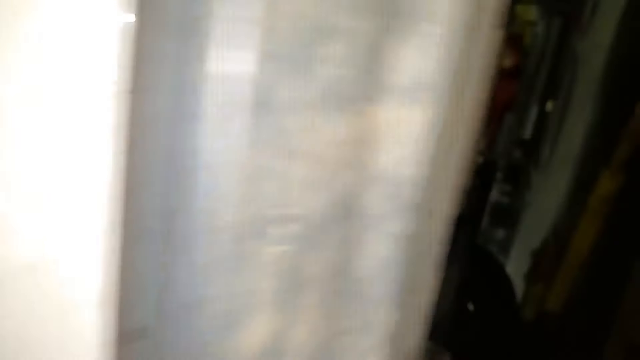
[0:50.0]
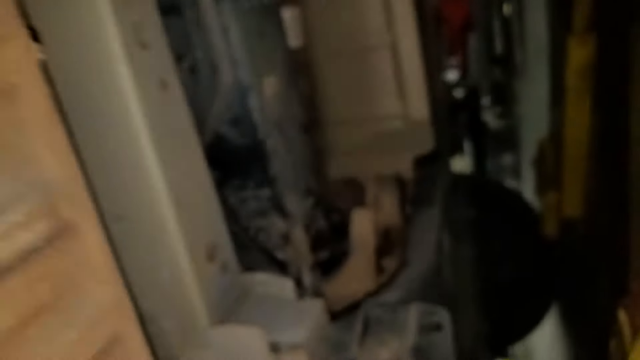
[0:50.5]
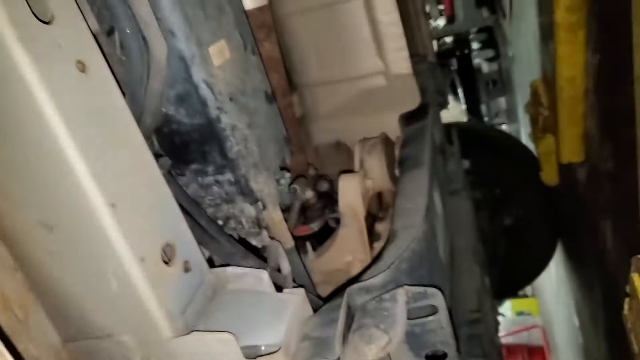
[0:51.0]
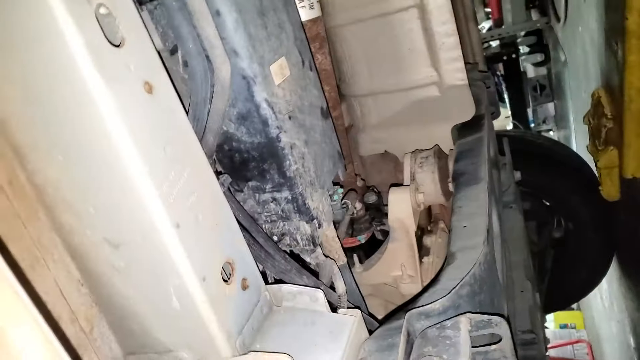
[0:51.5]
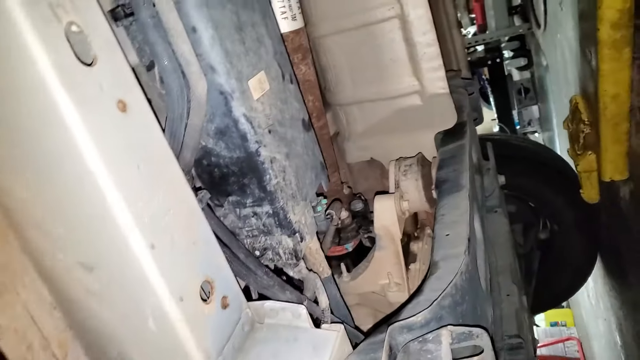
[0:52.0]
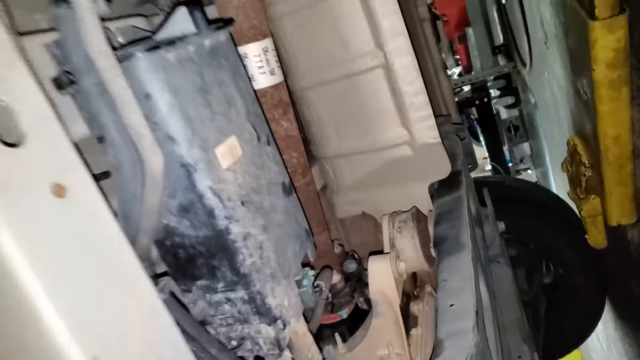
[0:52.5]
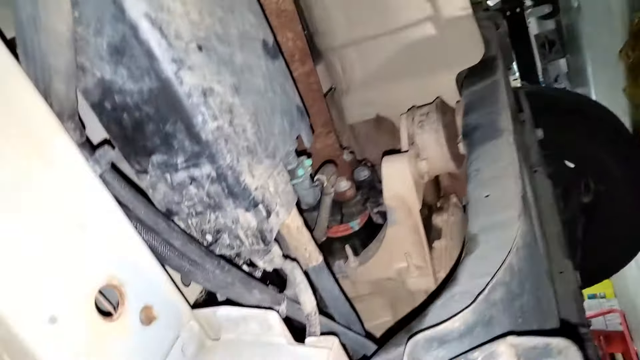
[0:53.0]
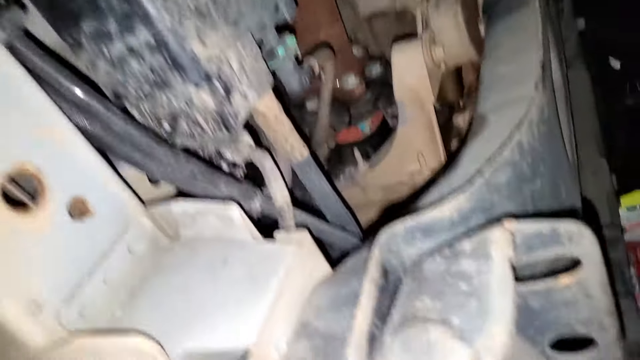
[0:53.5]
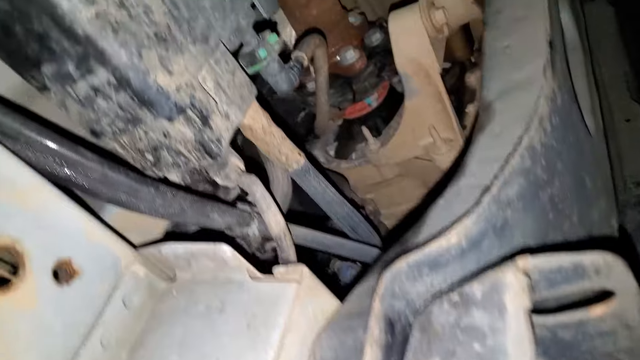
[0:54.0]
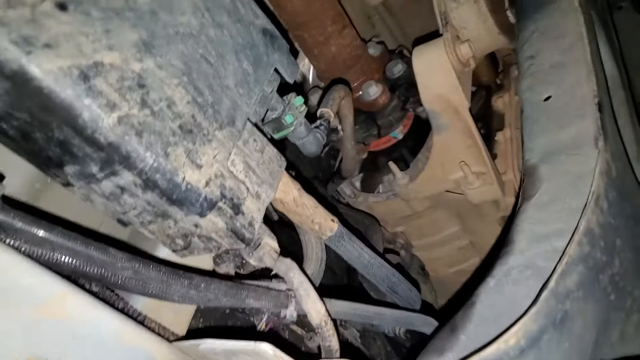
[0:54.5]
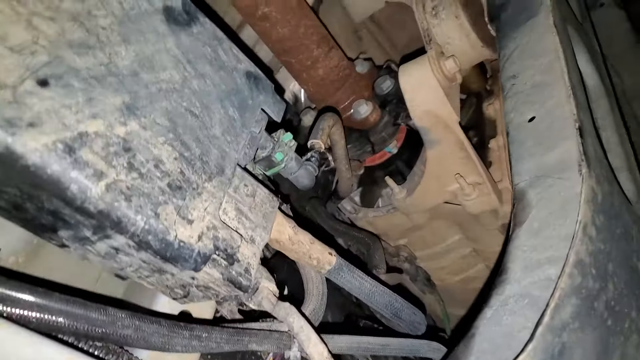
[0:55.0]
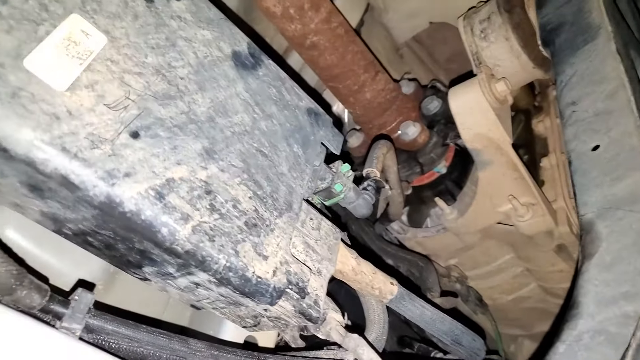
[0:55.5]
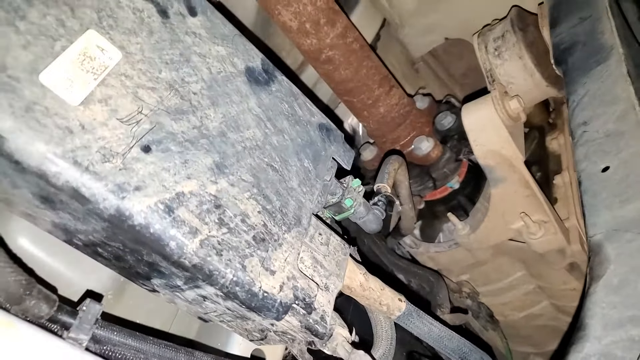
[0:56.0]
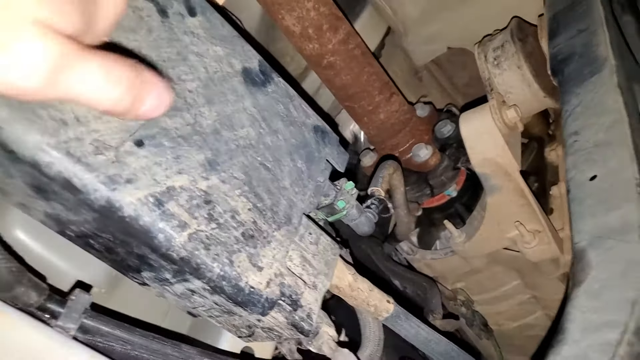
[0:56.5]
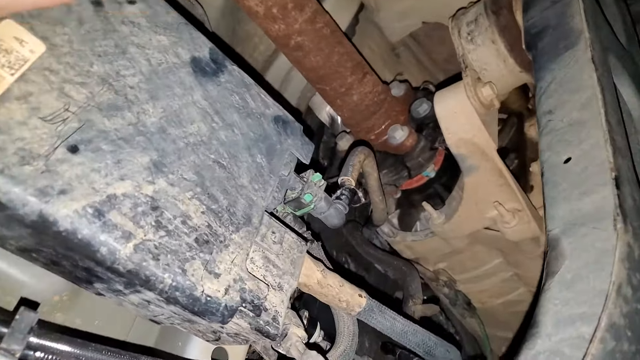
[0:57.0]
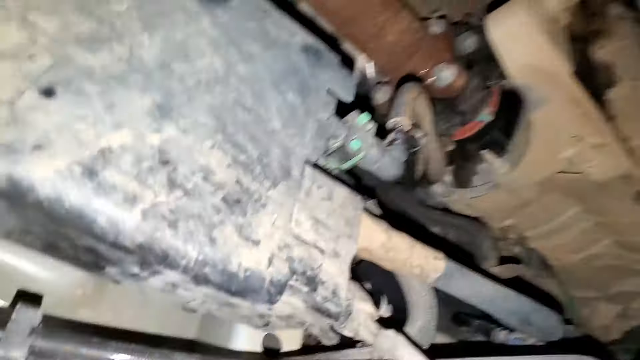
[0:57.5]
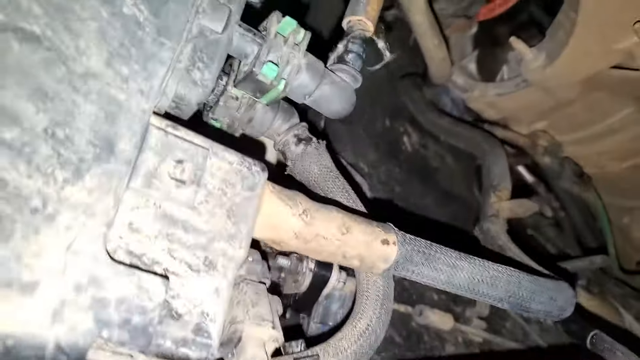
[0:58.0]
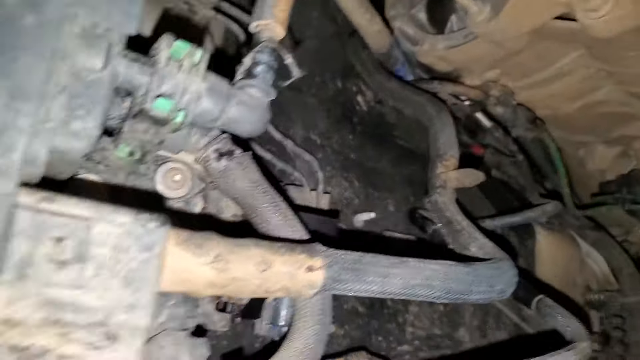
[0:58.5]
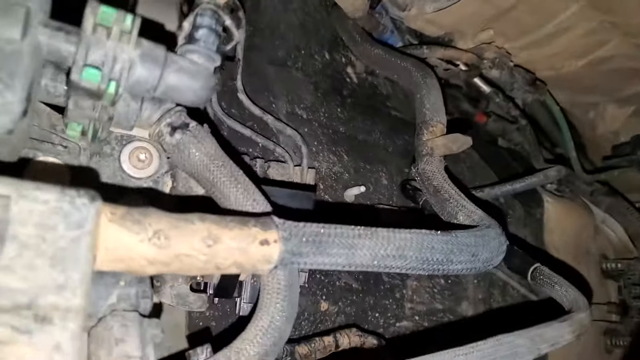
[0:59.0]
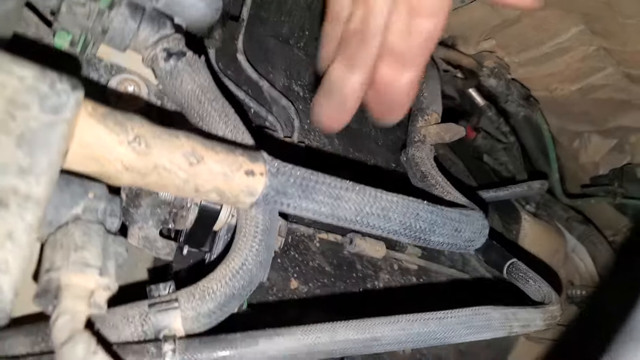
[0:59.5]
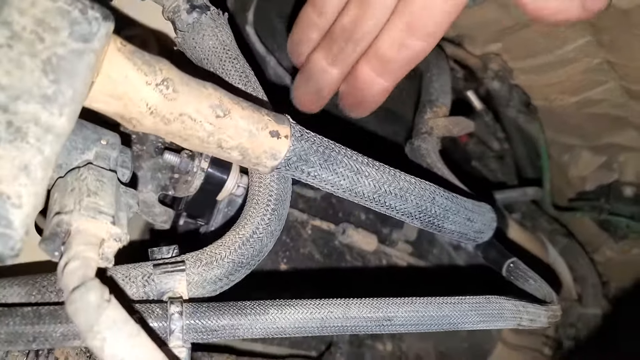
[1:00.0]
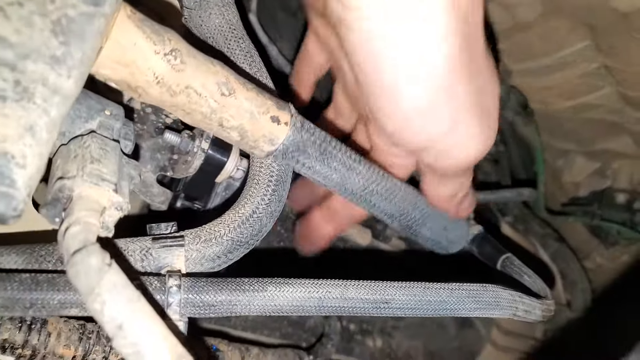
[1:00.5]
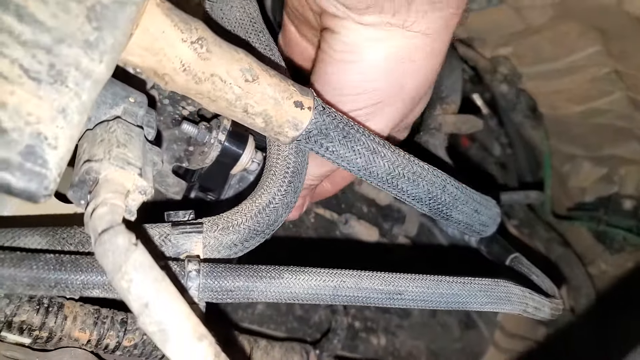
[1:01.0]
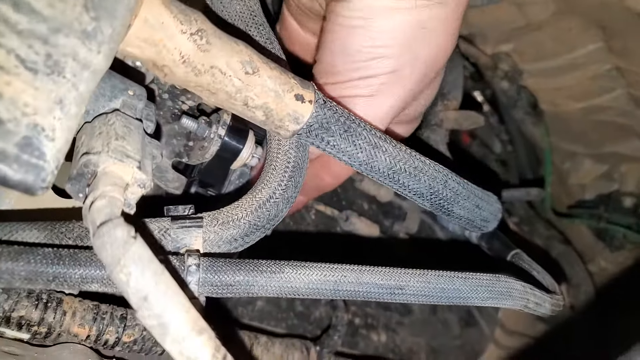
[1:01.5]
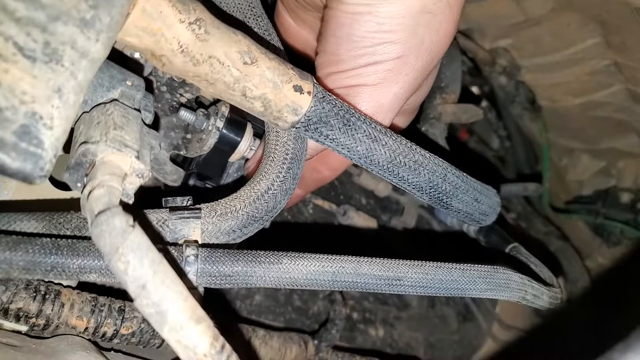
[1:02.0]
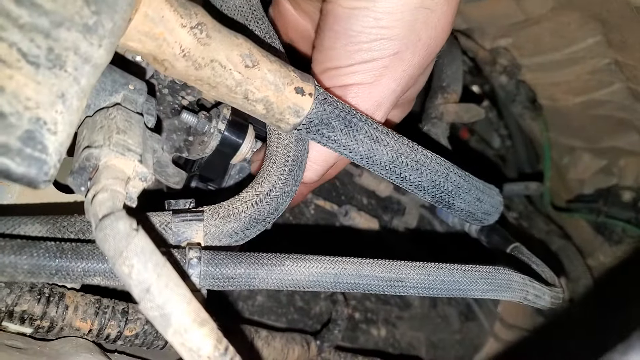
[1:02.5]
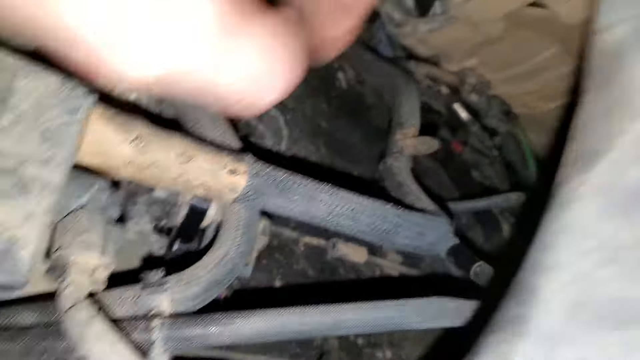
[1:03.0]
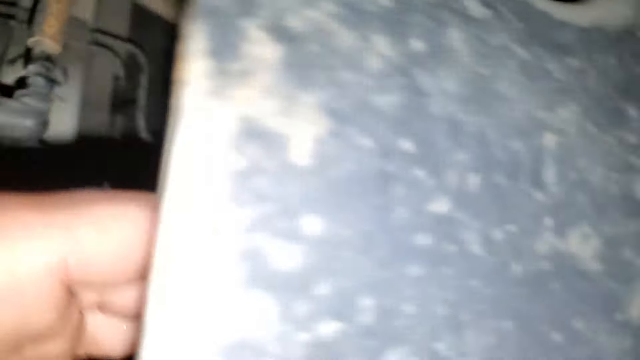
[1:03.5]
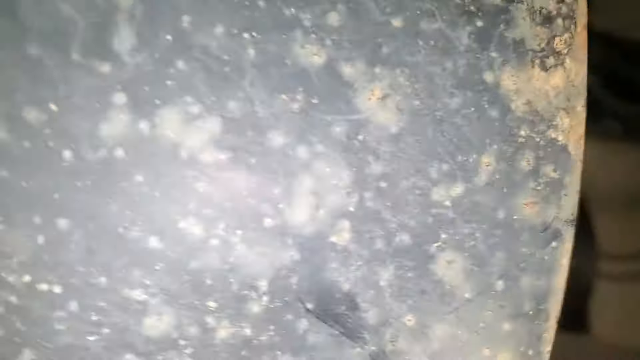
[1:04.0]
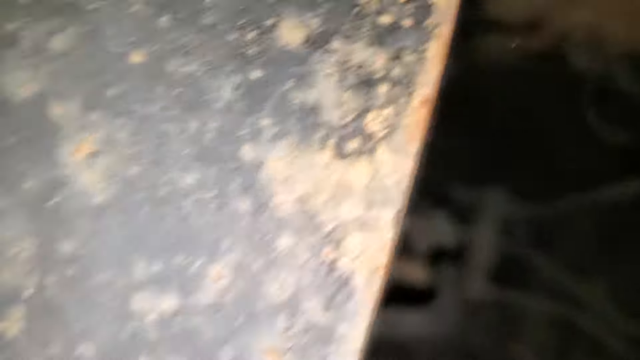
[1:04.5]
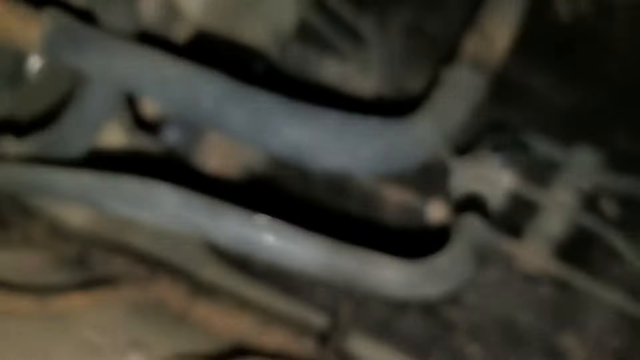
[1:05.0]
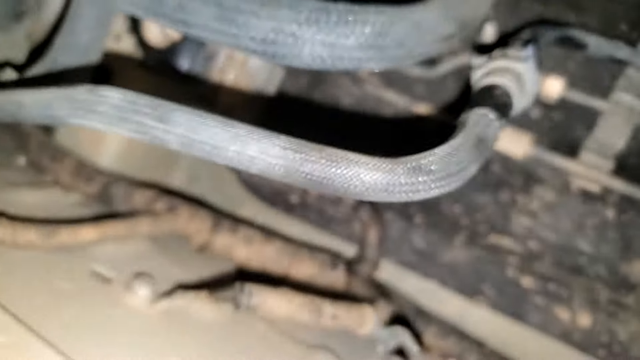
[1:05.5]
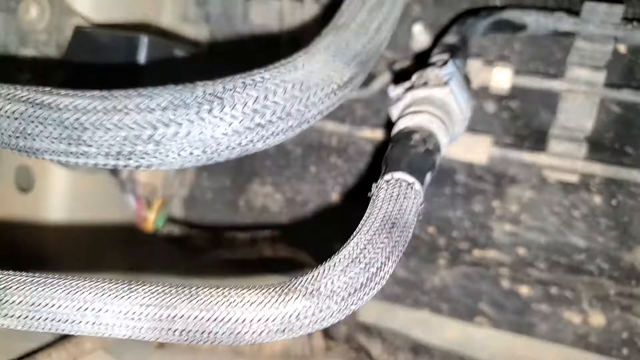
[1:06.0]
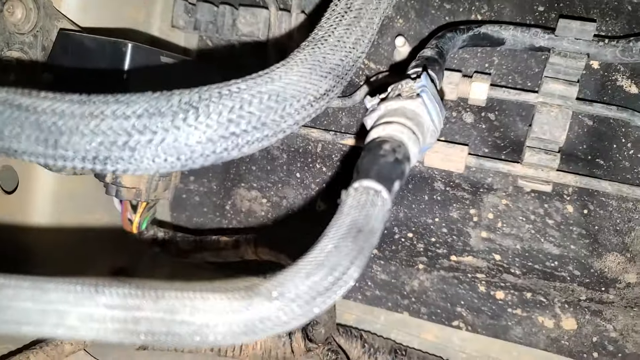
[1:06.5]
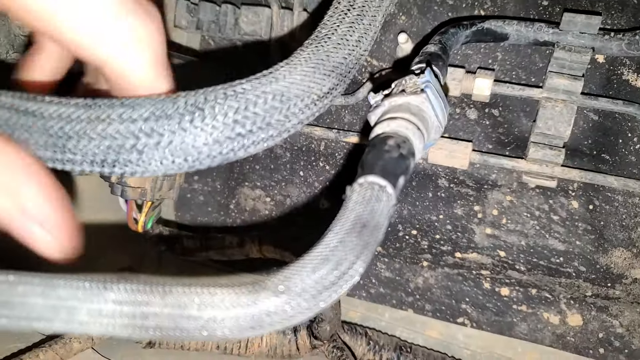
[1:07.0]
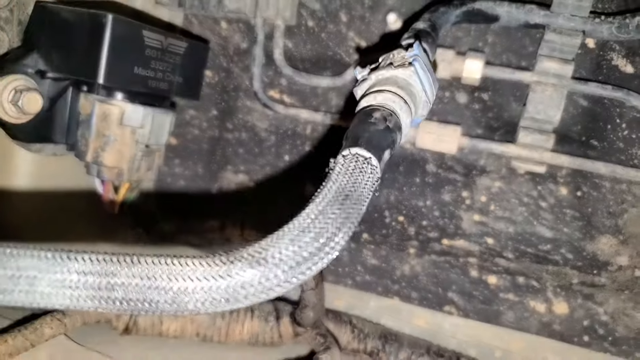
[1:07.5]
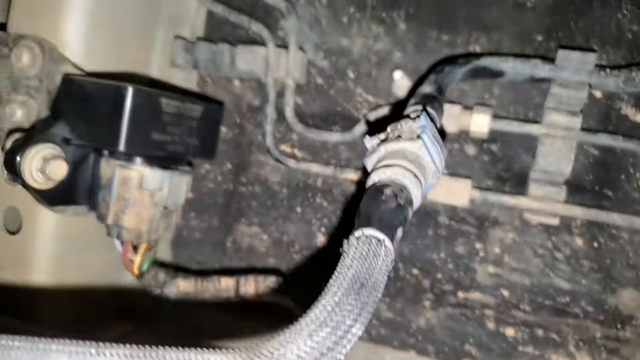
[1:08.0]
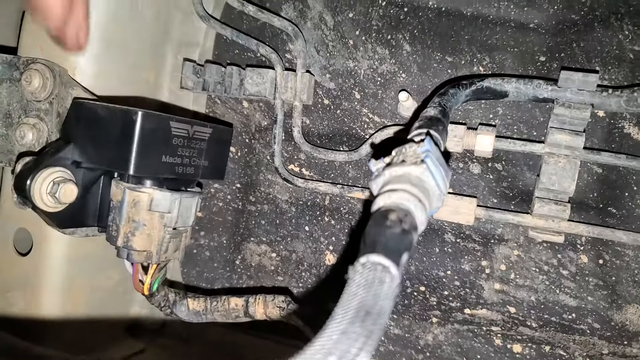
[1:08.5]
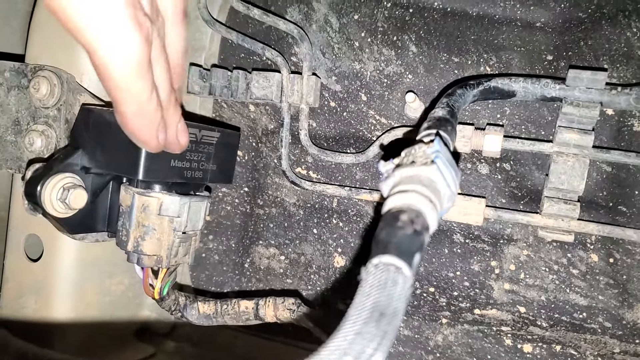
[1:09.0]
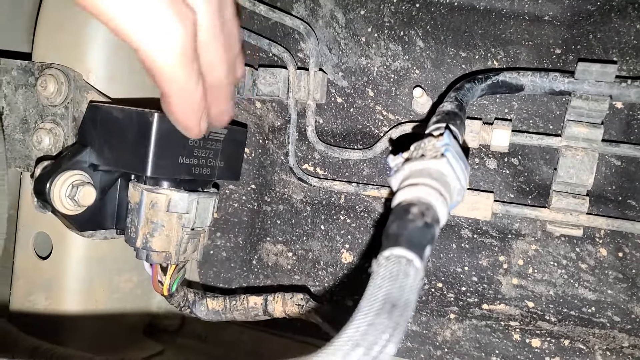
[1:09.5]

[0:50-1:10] The view shows the underside of a vehicle and the parts there; several are rusted over and others are completely covered in dirt. Someone grabs one of the dirt-covered portions of the vehicle with their left hand, releases it, then grabs a nozzle attached to that same dirt-covered part and twists it for a moment. They remove their hand, grab a fabric-covered hose with the same left hand, and pull it. They then press the black plastic part of another area underneath the vehicle.